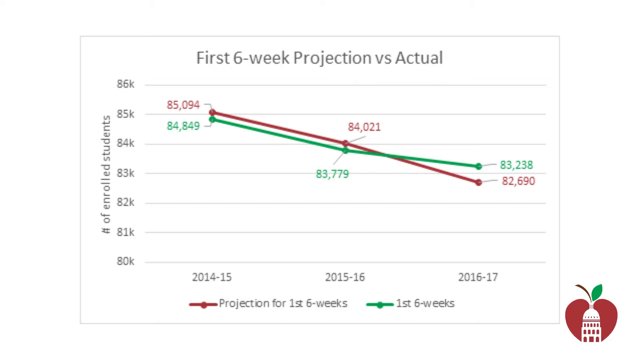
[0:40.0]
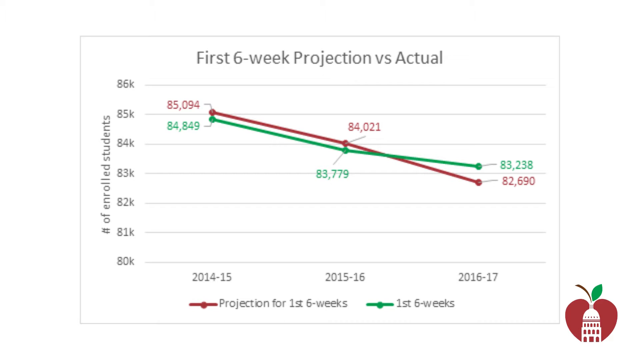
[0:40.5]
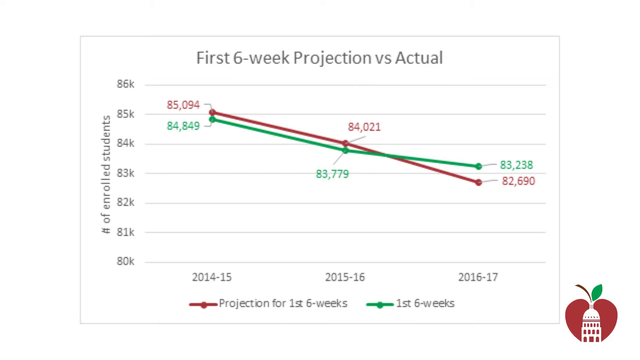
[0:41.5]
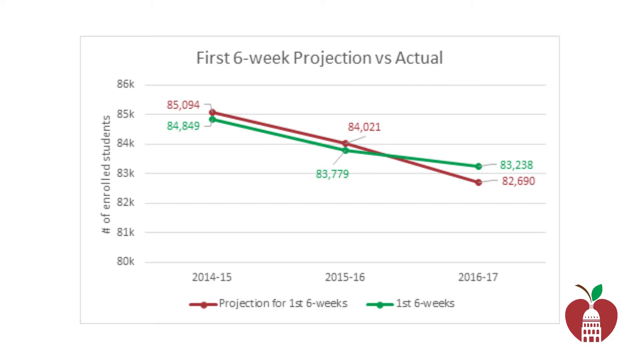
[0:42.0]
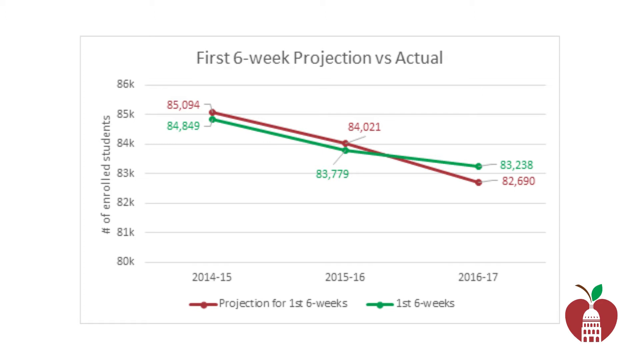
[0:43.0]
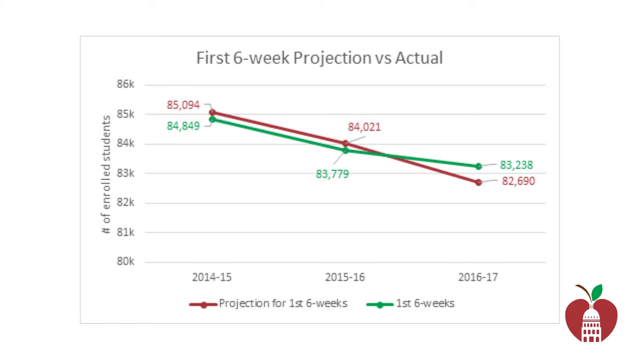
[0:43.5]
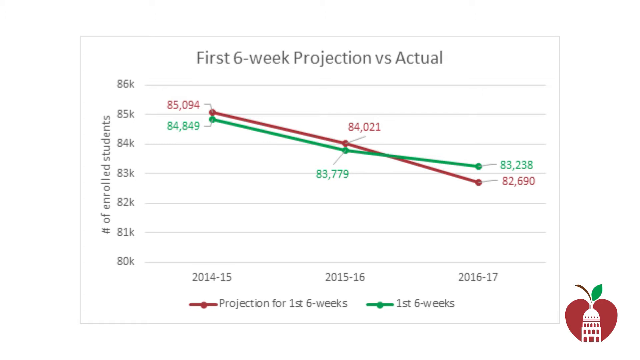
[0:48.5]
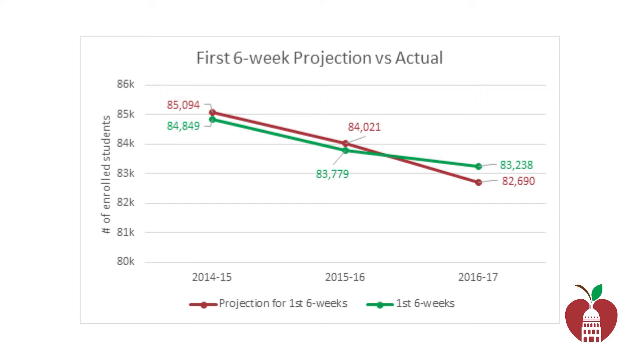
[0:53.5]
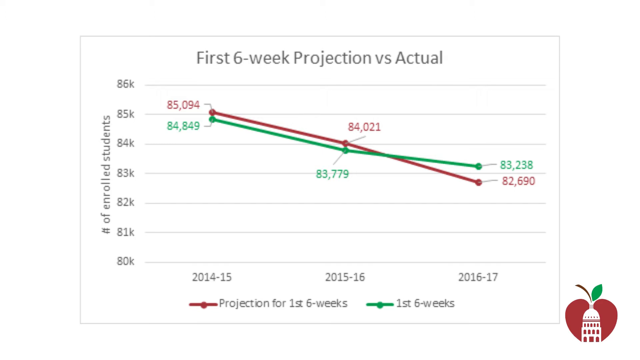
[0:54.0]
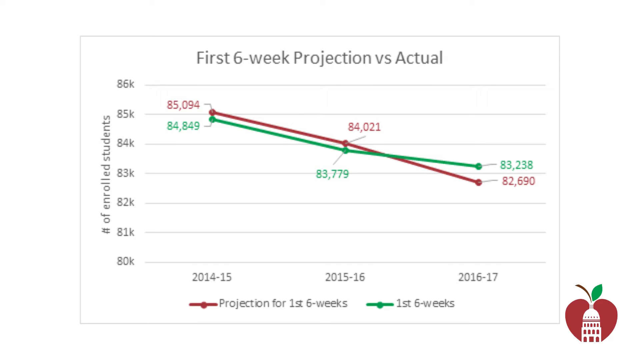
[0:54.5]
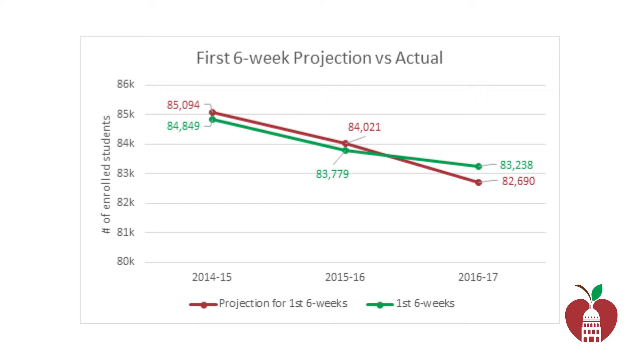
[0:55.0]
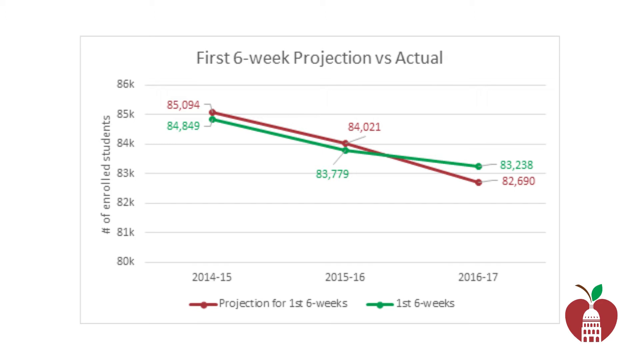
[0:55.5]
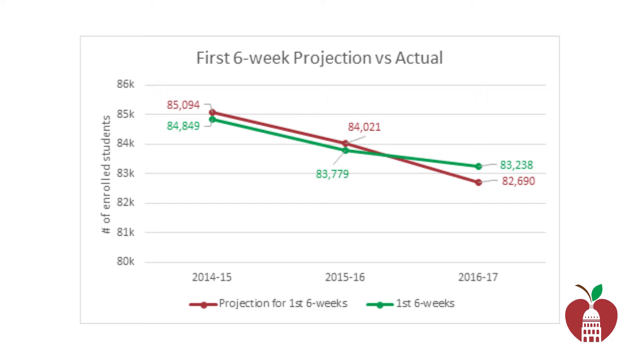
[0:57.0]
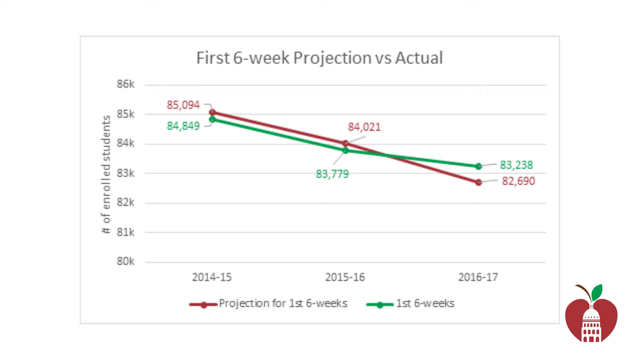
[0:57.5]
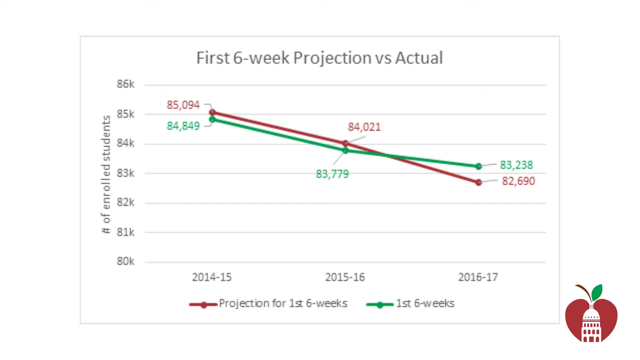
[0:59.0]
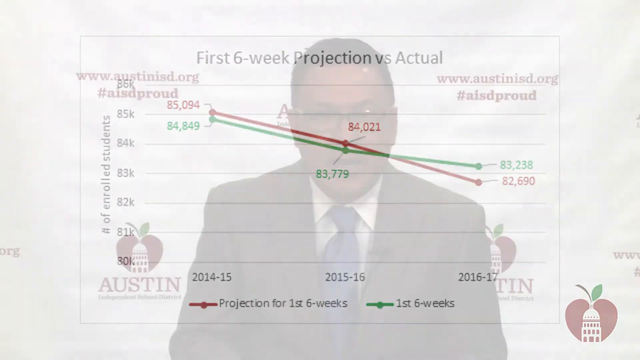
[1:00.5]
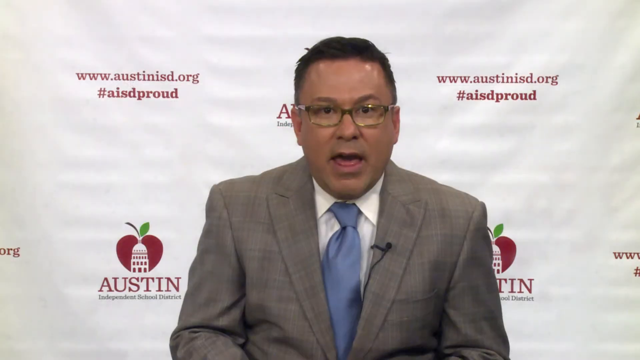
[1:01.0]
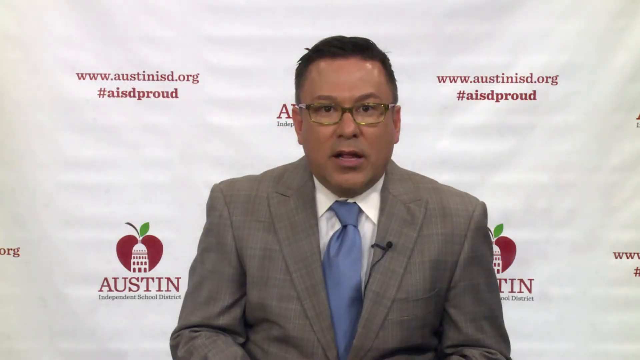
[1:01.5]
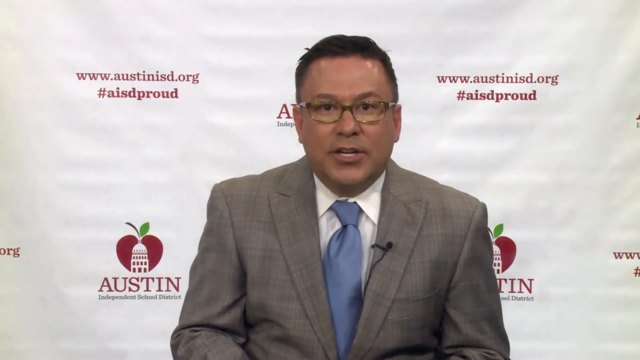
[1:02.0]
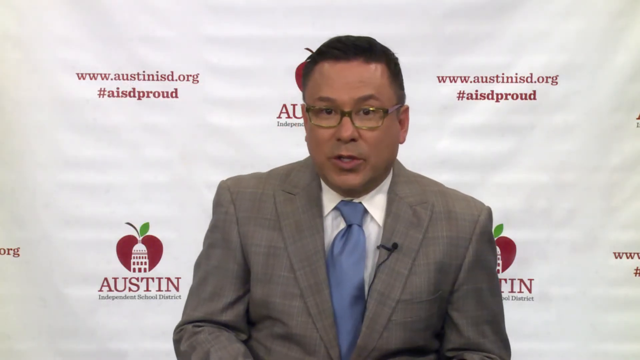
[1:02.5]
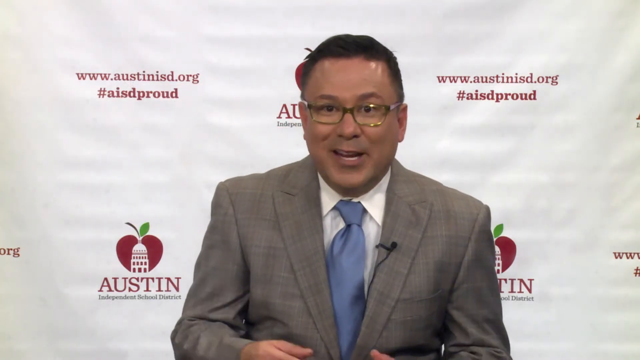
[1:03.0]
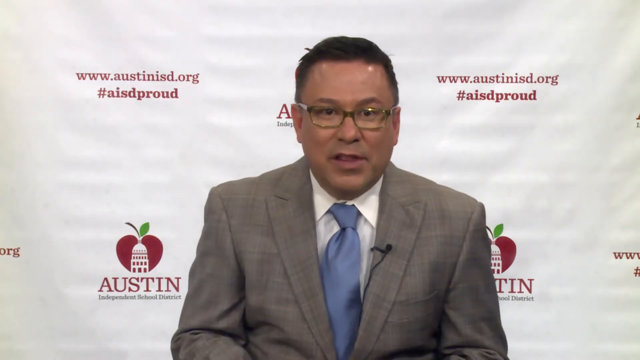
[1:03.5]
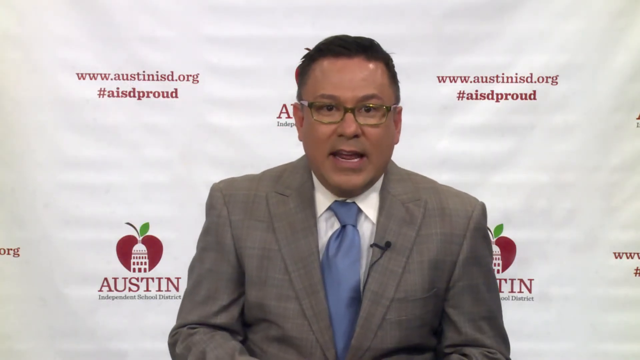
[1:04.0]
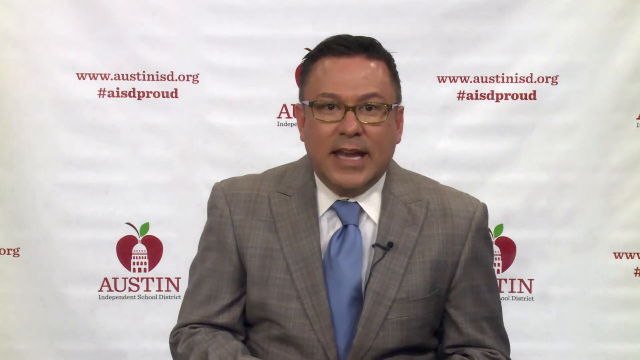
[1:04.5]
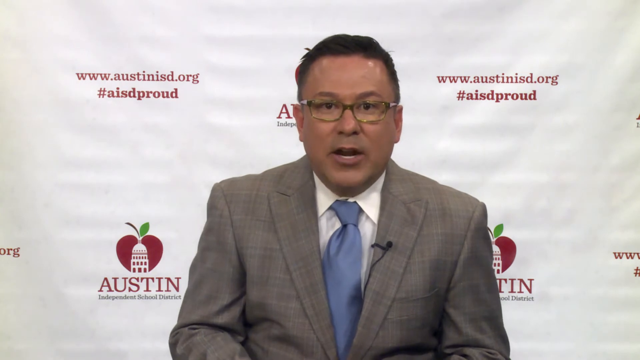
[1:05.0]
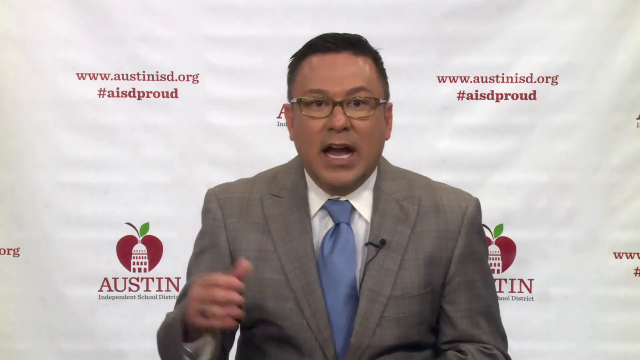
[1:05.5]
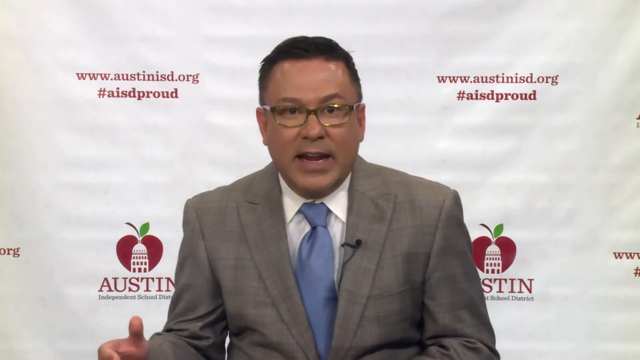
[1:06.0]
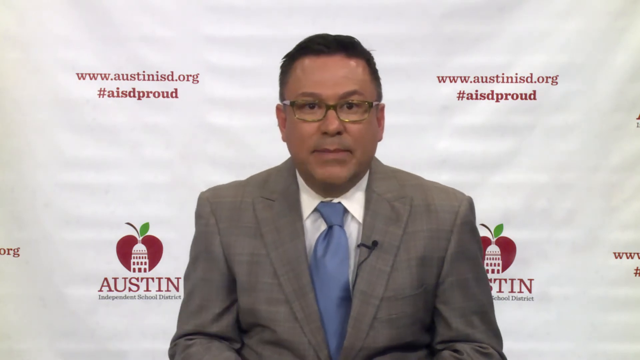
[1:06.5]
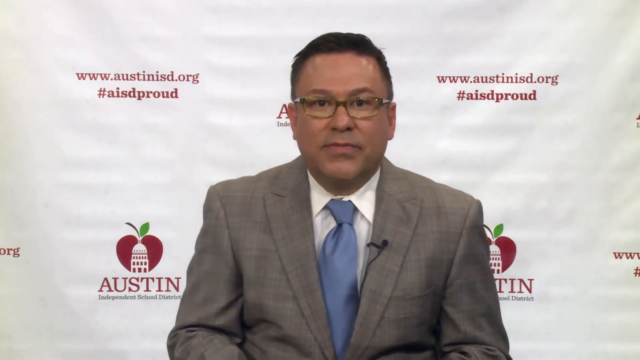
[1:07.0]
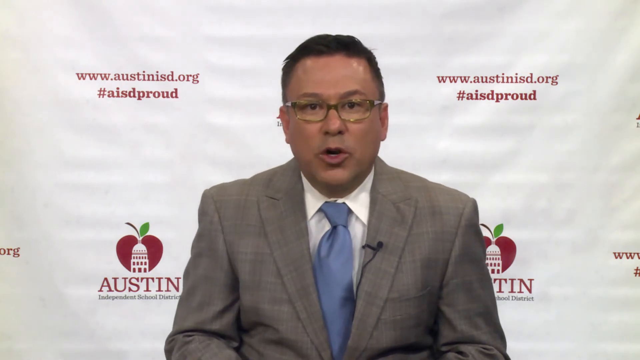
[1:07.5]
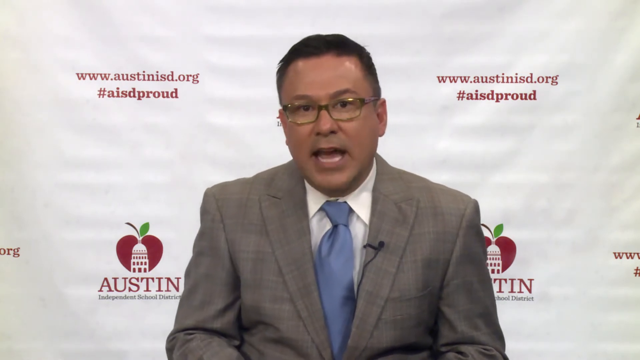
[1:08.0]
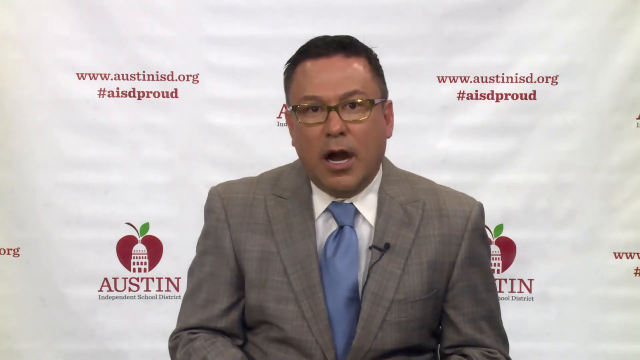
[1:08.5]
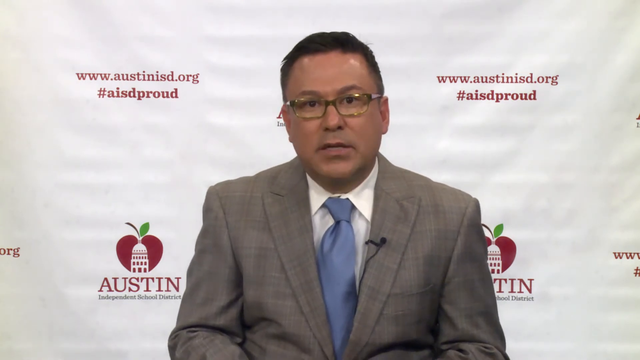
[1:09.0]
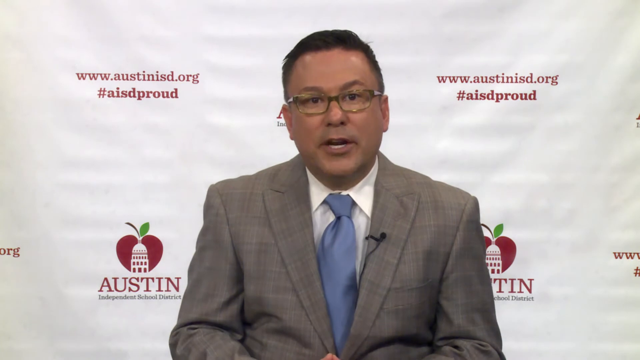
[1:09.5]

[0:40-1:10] A small graph shows the number of enrolled students against the projections for the first six weeks of each year, up to 2017. In the first couple of years the figures are a little under, while in the last year, 2016–2017, there are more enrolled students, around 83,000. A man then appears on screen wearing something like a gray blazer or jacket, a blue tie and a white shirt, with a small microphone attached to the inside of his jacket, and glasses. He talks in front of the camera.